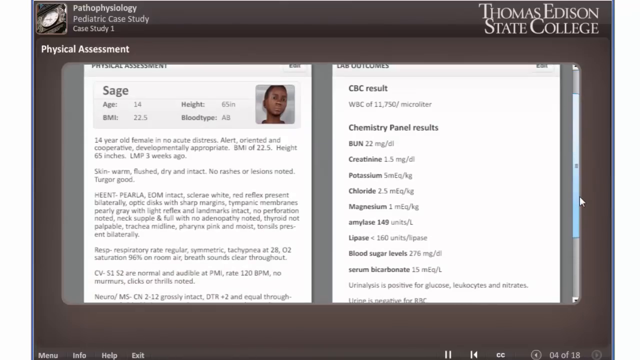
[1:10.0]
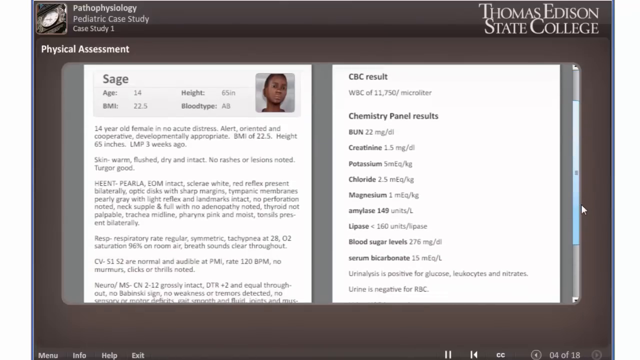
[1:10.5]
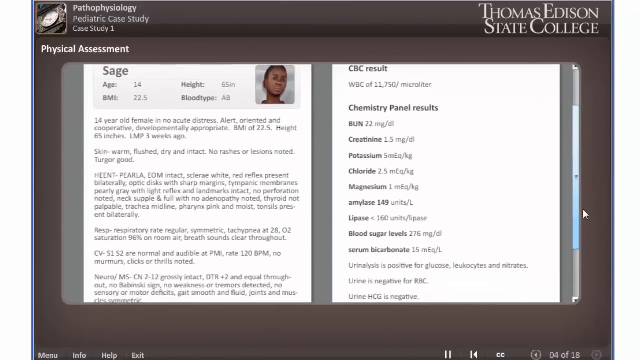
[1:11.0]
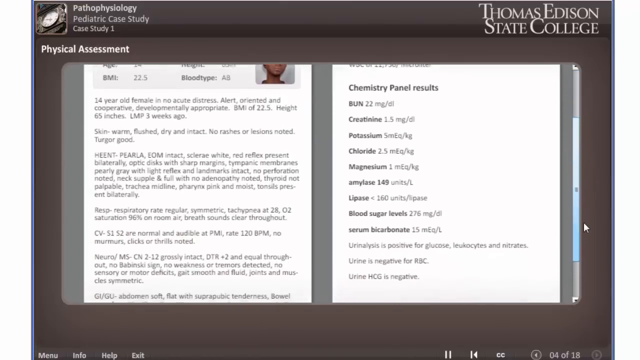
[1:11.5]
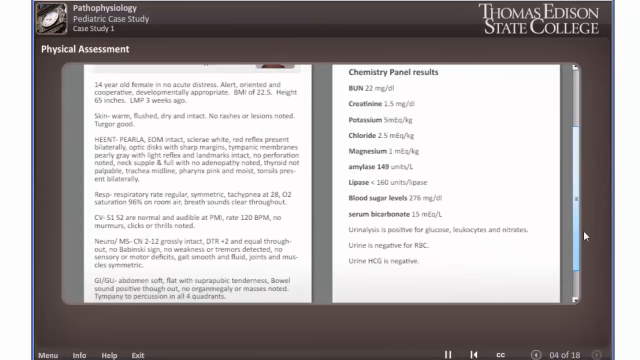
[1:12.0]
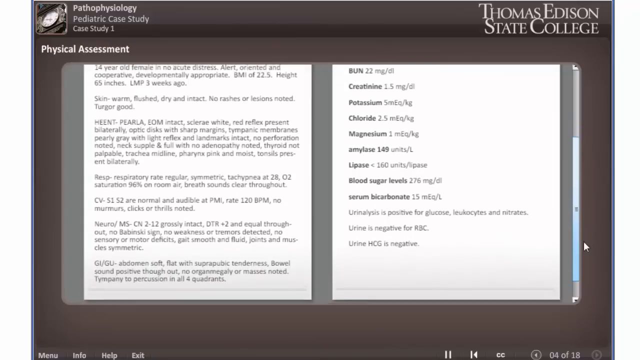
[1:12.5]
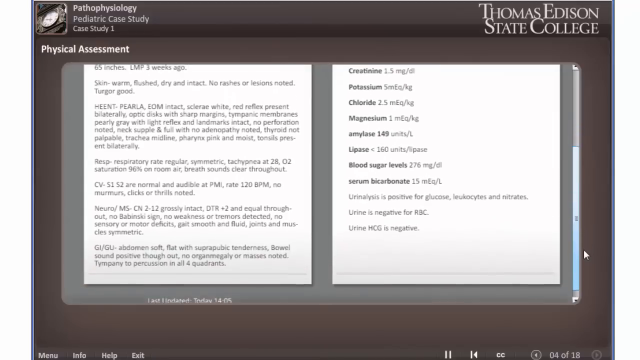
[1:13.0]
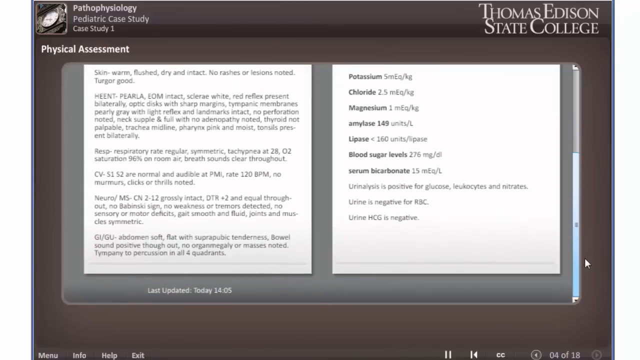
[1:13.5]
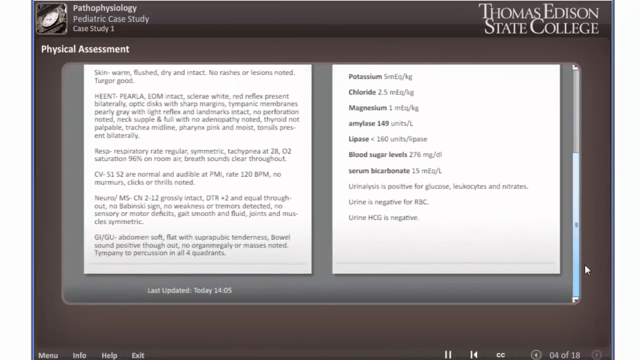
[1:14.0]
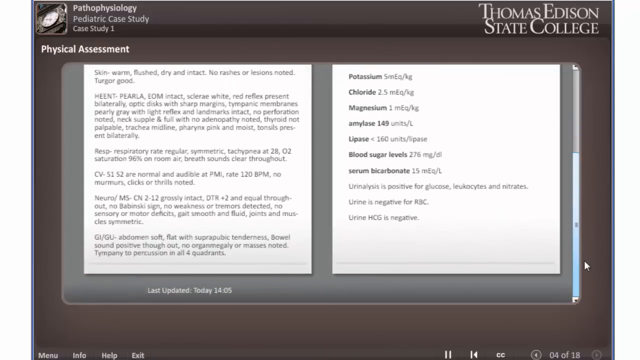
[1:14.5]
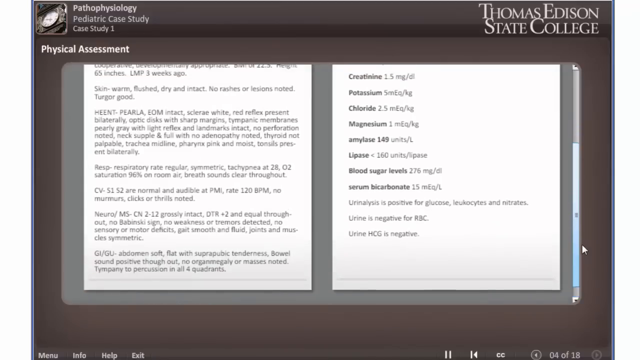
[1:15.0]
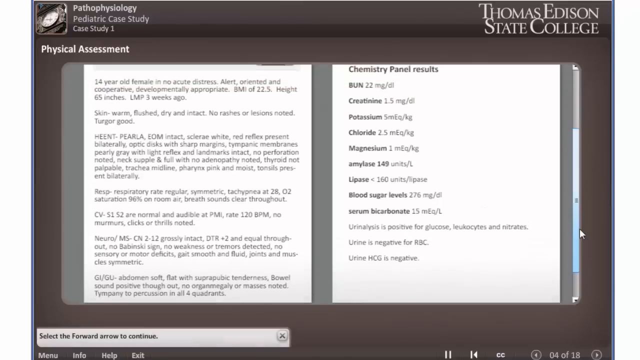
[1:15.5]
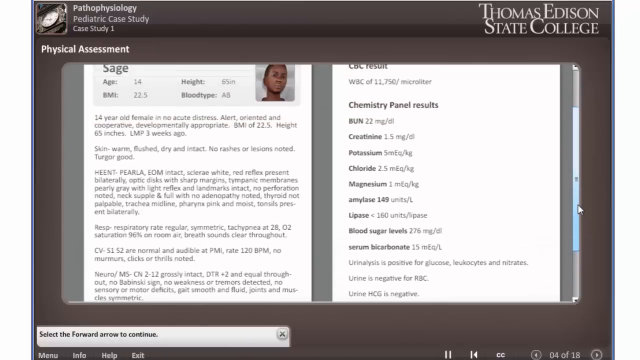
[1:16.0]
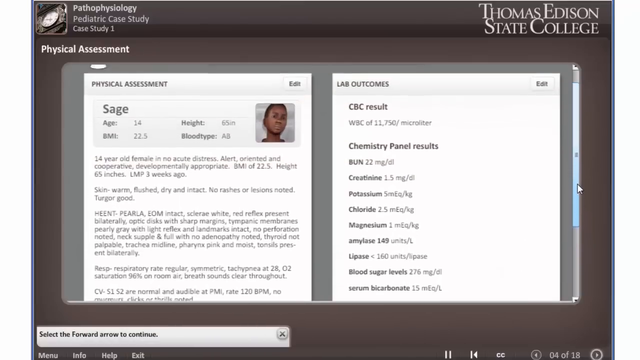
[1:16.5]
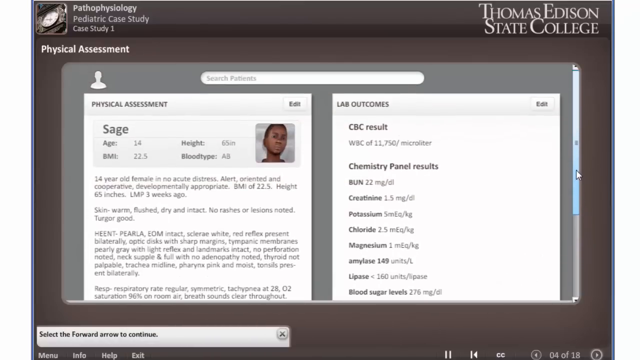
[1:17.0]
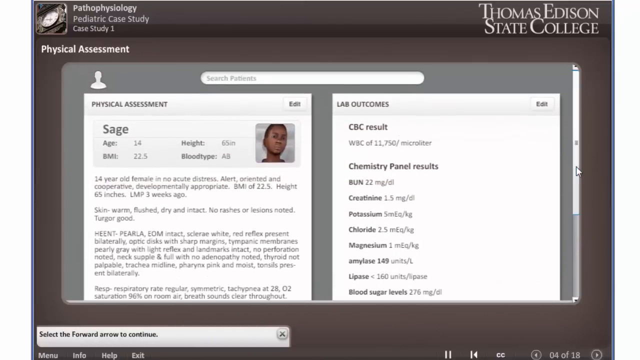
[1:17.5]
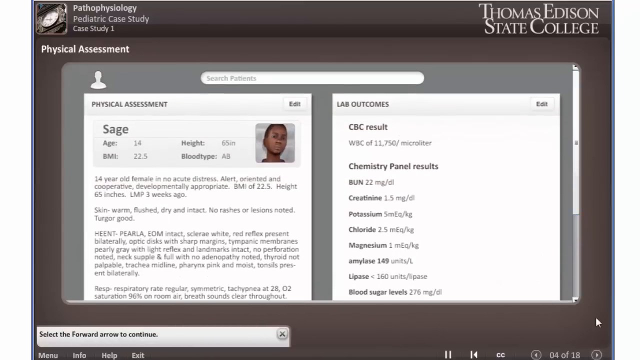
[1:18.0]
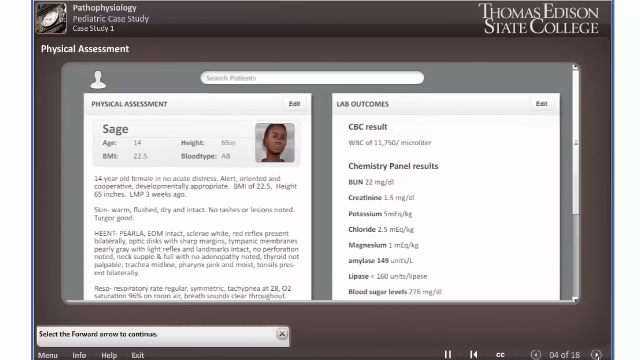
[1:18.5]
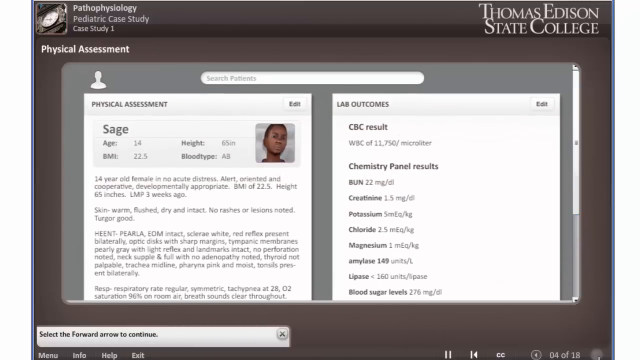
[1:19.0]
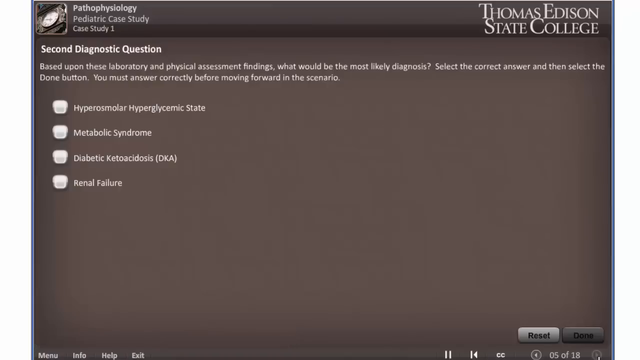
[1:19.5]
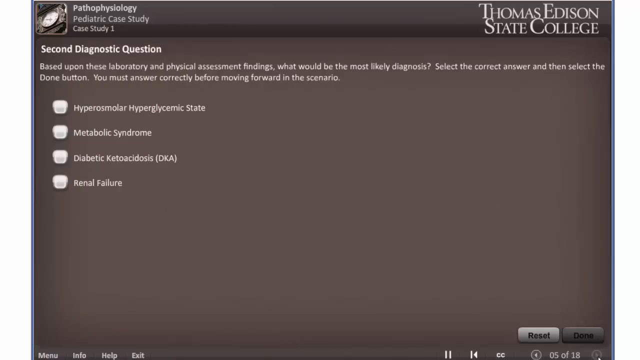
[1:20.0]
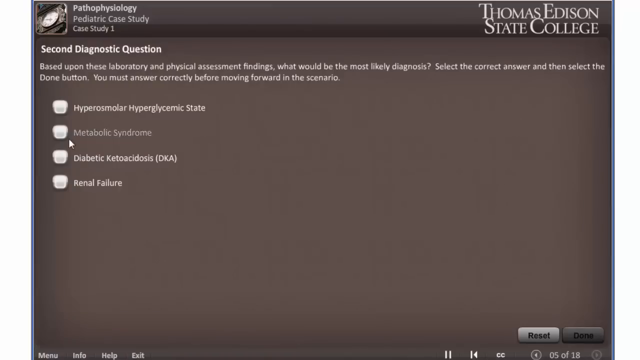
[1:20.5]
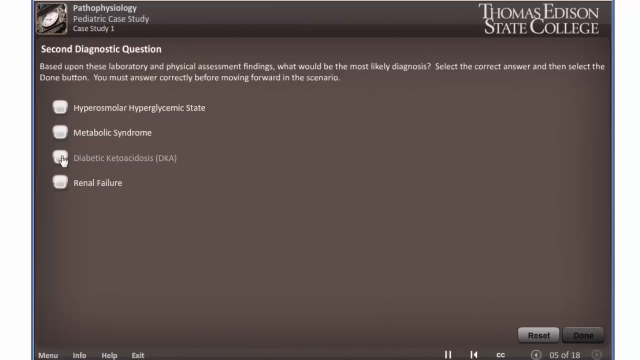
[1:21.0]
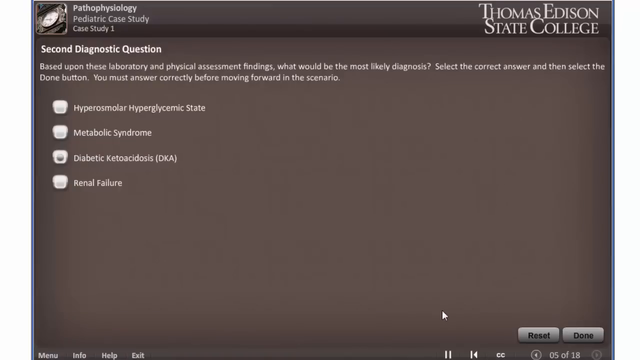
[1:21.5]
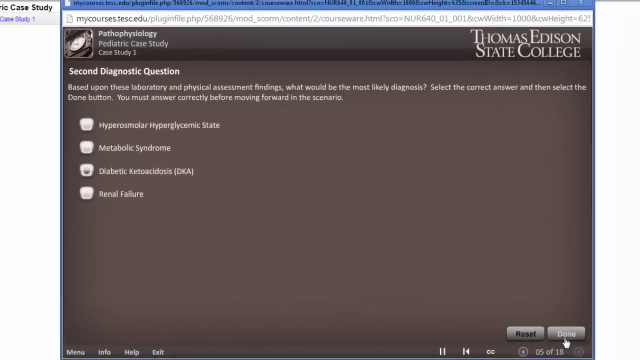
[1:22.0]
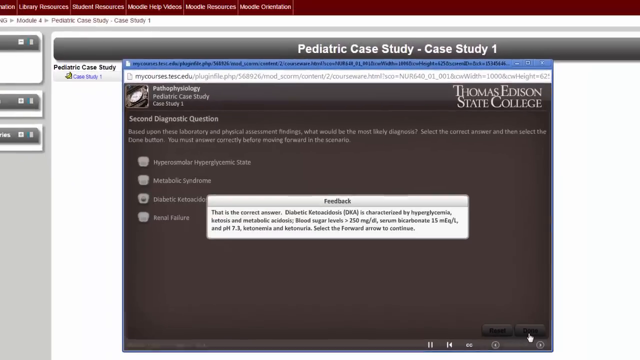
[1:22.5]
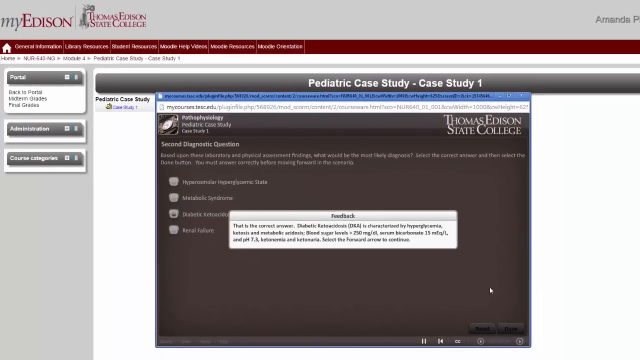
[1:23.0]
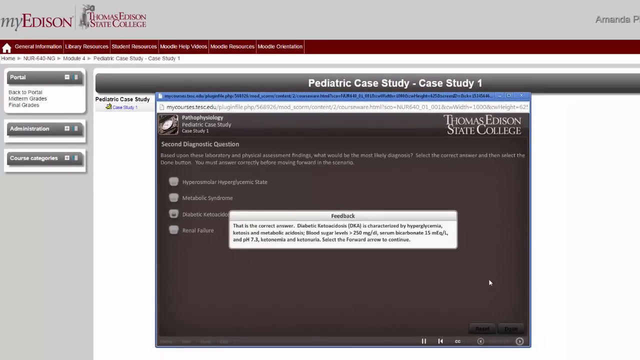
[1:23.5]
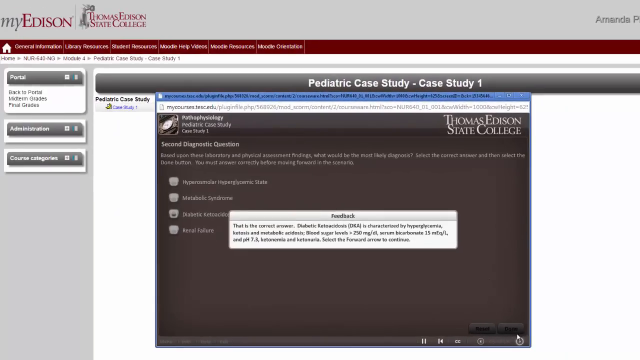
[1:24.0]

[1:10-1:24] The patient's personal information is displayed. On the left side, her name is Sage, she is 14 years old, her height looks like maybe 65 inches, her blood type looks like AB, and her BMI is 22.5. The words are small, but the text appears to say "14 year old female and no acute distress. Alert oriented and cooperative. Developmentally appropriate. BMI of 22.5. Height of 65 inches." A line possibly beginning "LMP" reads "one week ago", followed by "Skin warm flush dry and intact. No rashes or lesions noted." On the other side, text says "CBC result" with a value of possibly 11.75. The page is scrolled down further, then scrolled up, the forward arrow is reached, and the view zooms out.